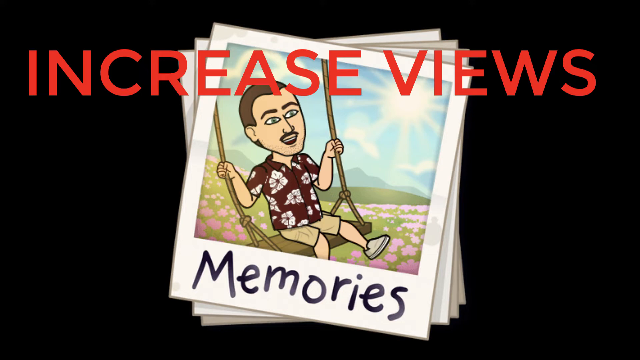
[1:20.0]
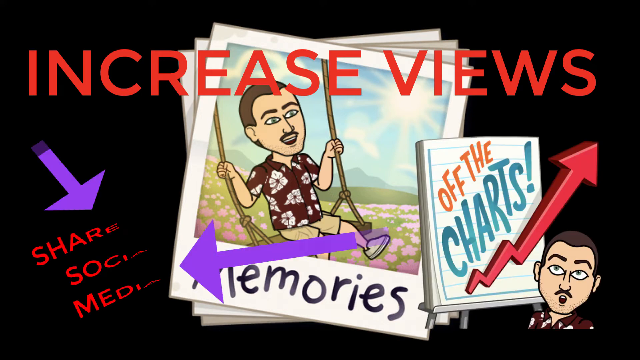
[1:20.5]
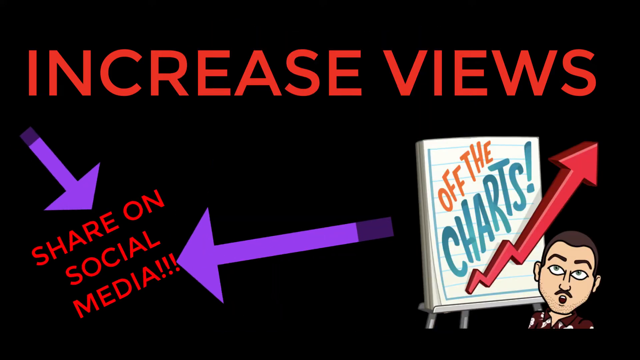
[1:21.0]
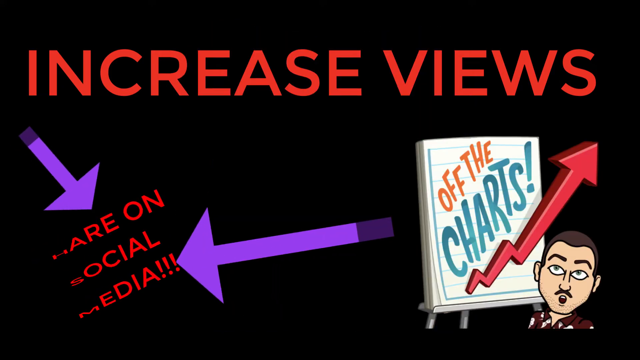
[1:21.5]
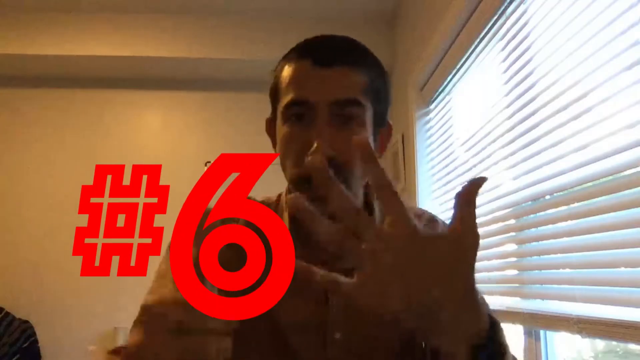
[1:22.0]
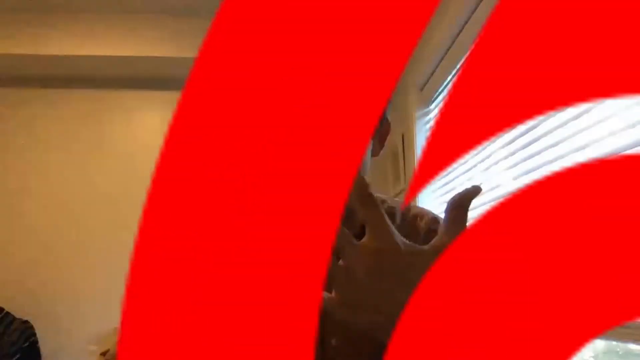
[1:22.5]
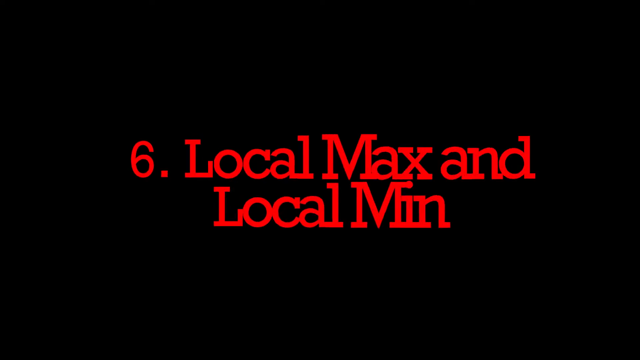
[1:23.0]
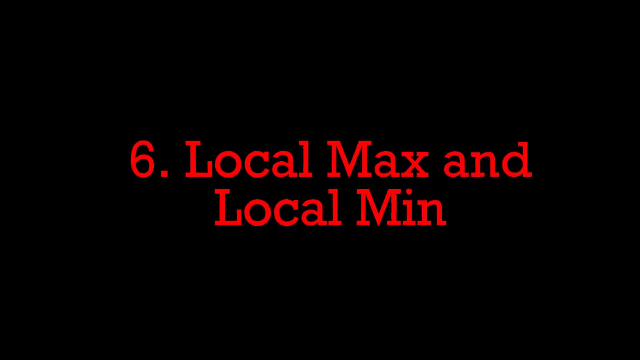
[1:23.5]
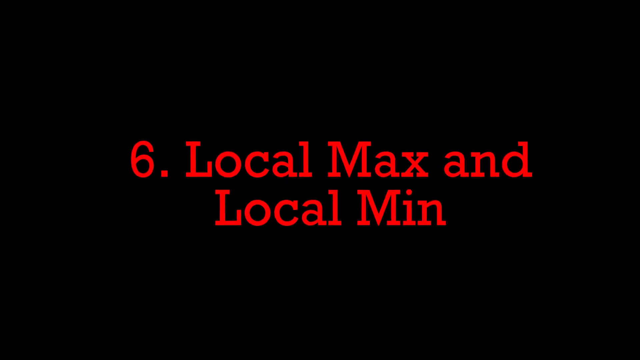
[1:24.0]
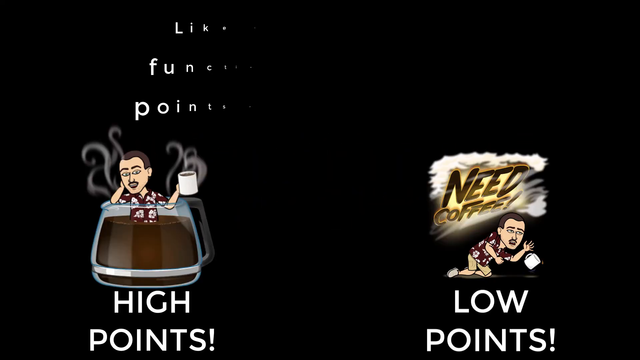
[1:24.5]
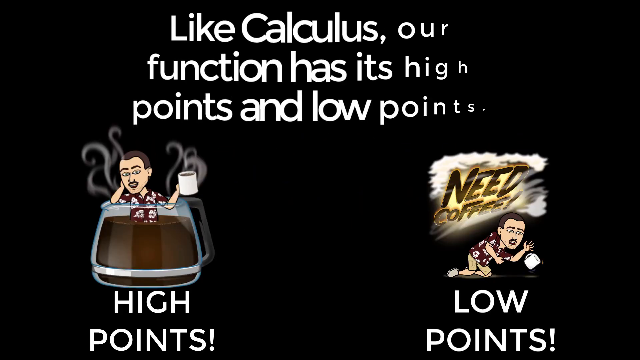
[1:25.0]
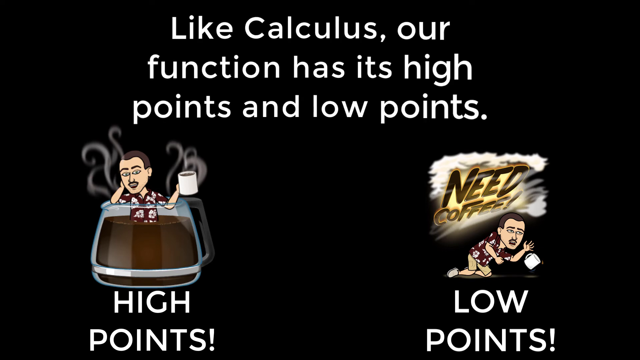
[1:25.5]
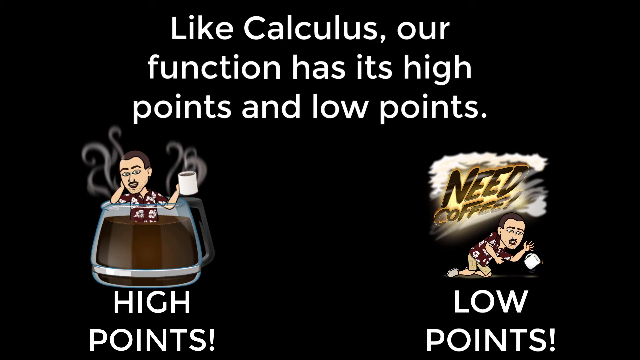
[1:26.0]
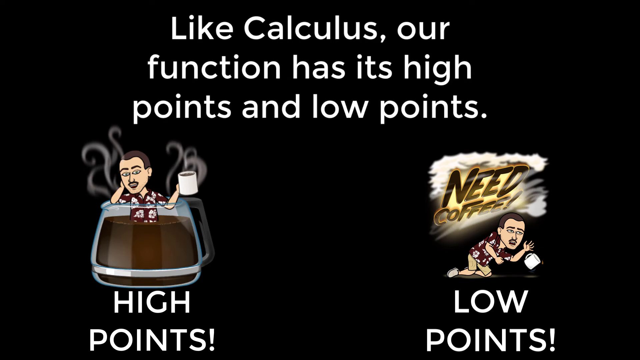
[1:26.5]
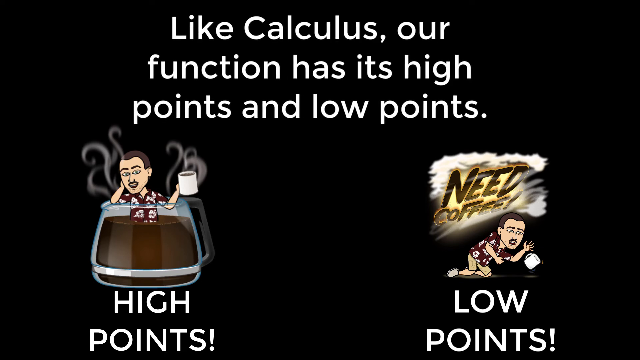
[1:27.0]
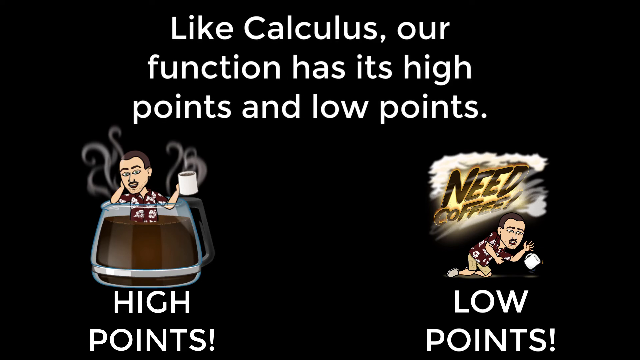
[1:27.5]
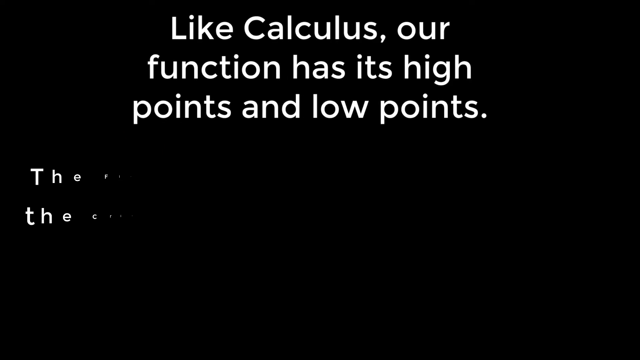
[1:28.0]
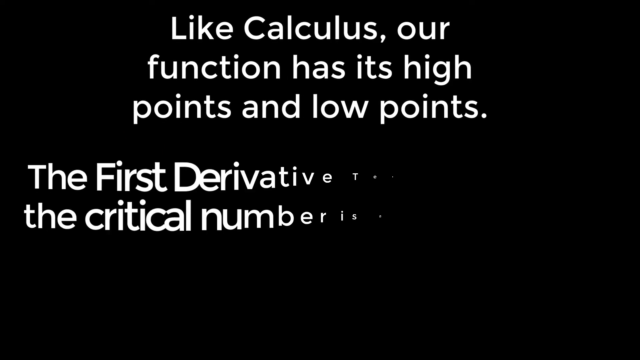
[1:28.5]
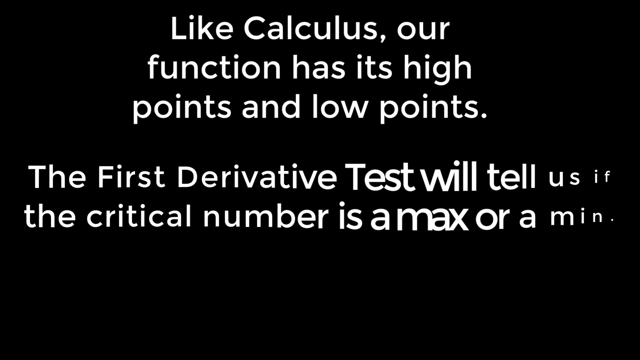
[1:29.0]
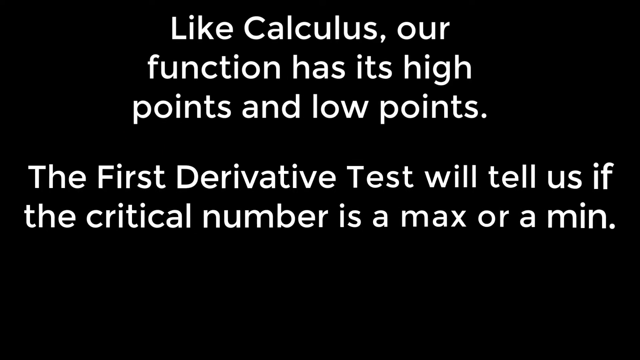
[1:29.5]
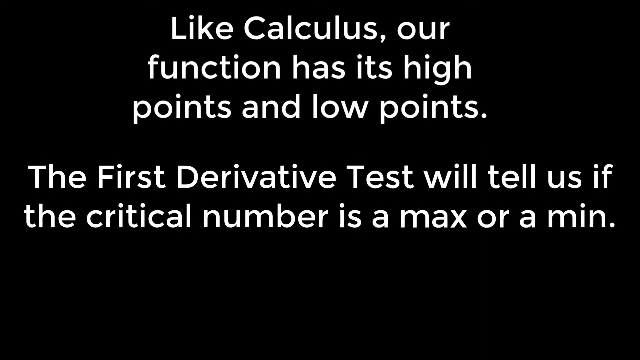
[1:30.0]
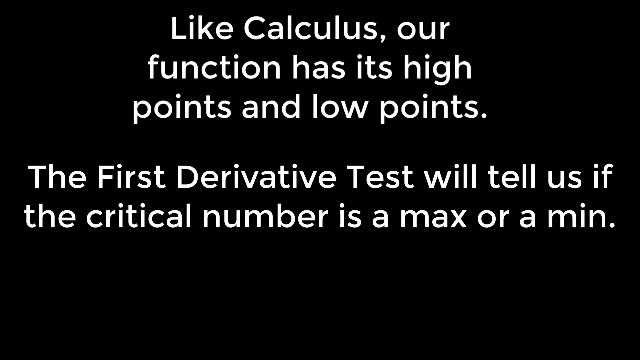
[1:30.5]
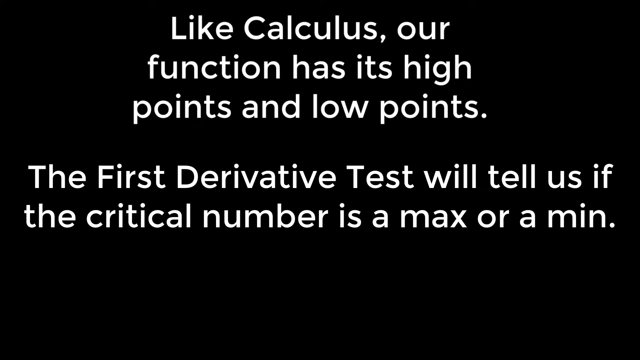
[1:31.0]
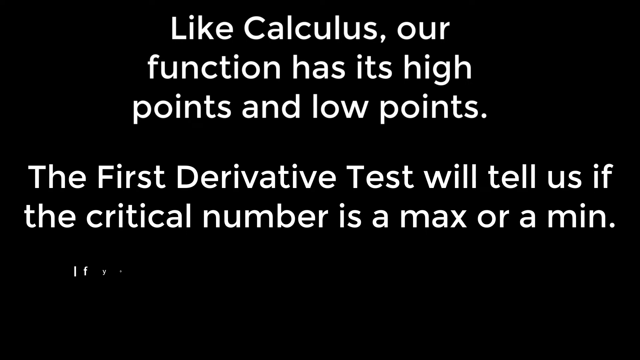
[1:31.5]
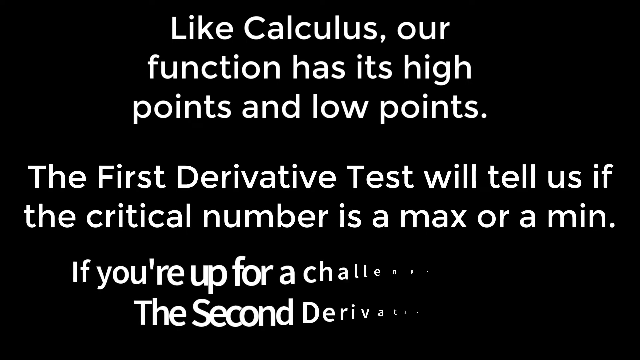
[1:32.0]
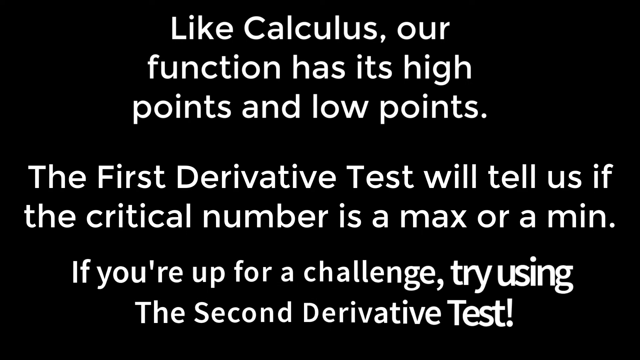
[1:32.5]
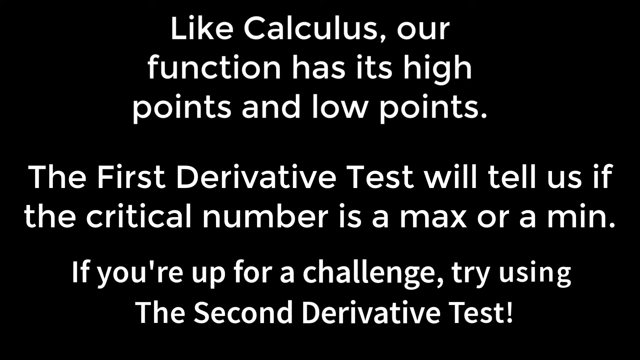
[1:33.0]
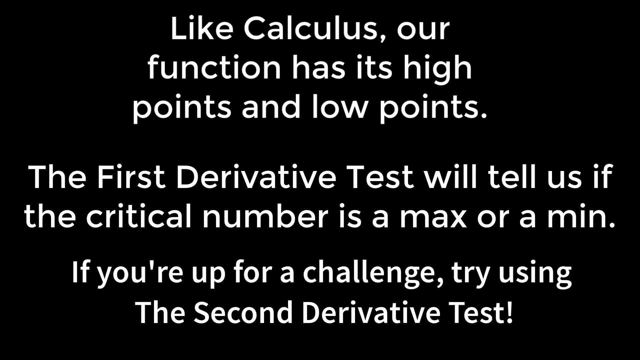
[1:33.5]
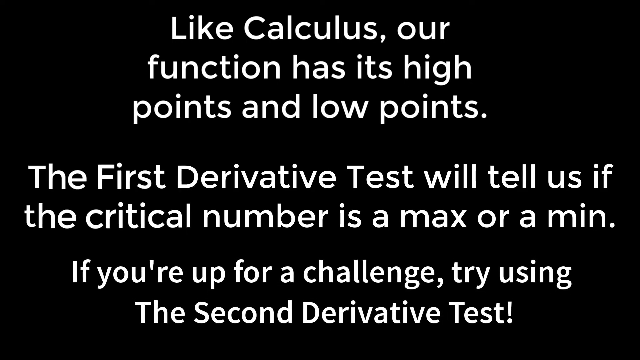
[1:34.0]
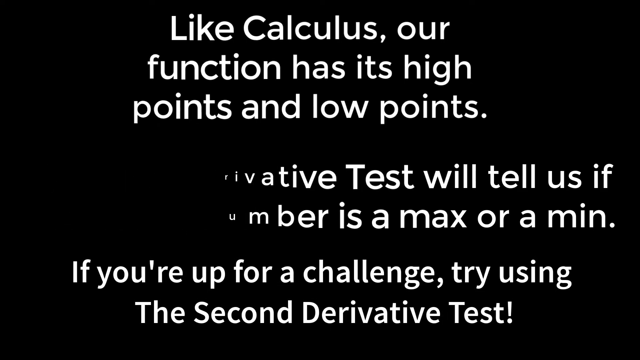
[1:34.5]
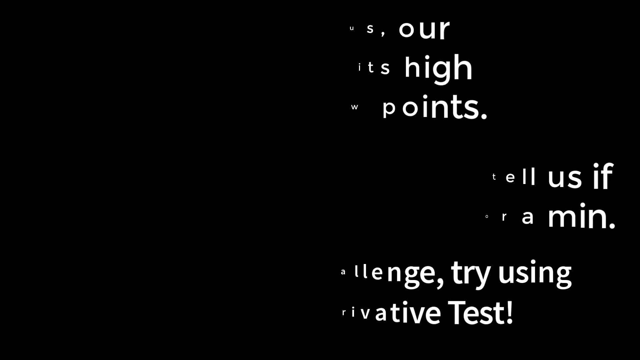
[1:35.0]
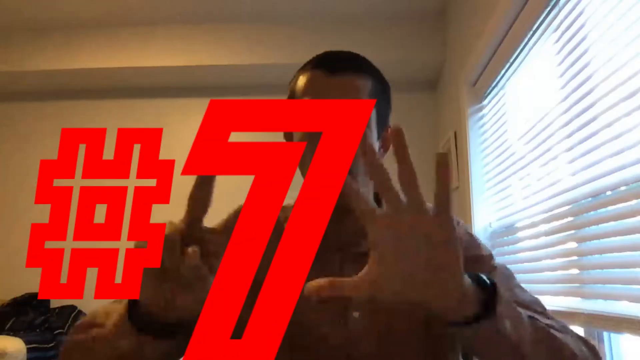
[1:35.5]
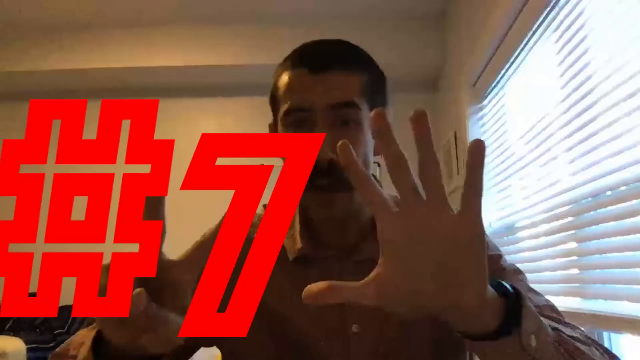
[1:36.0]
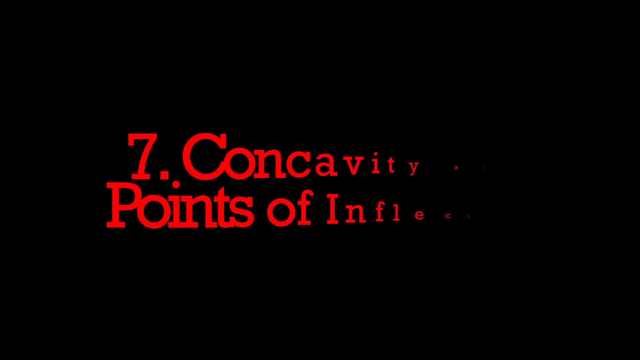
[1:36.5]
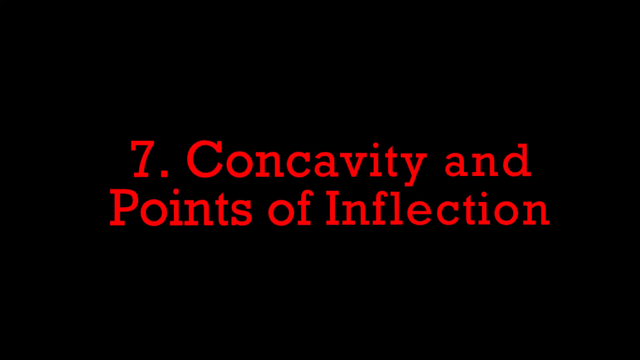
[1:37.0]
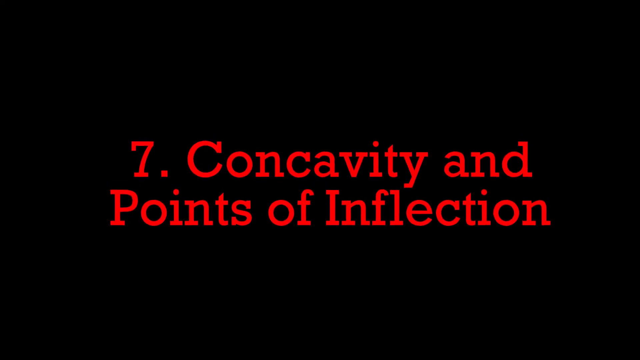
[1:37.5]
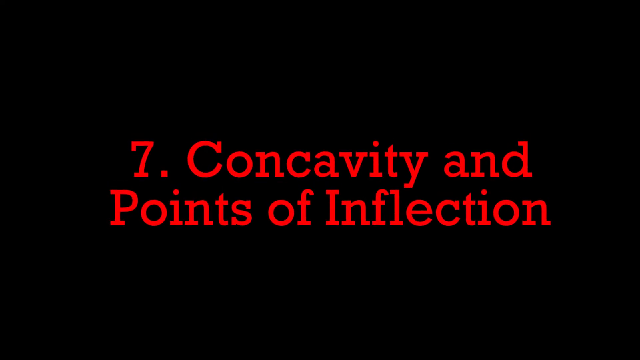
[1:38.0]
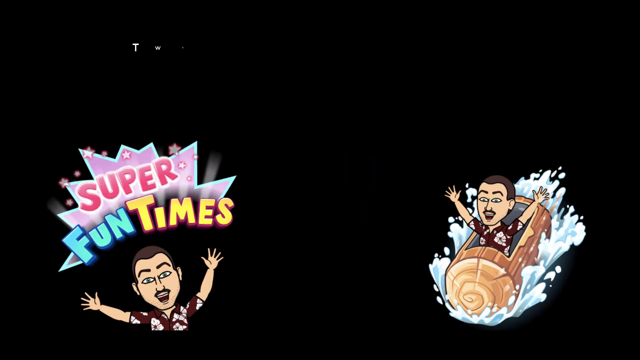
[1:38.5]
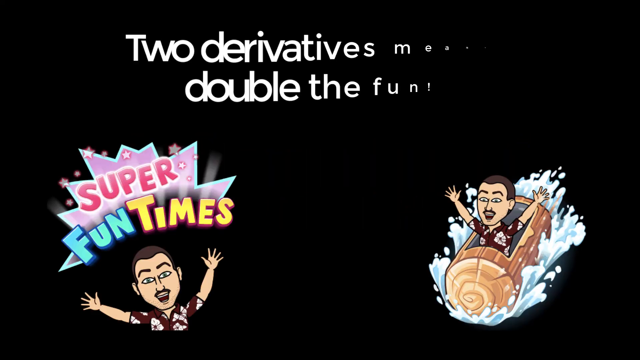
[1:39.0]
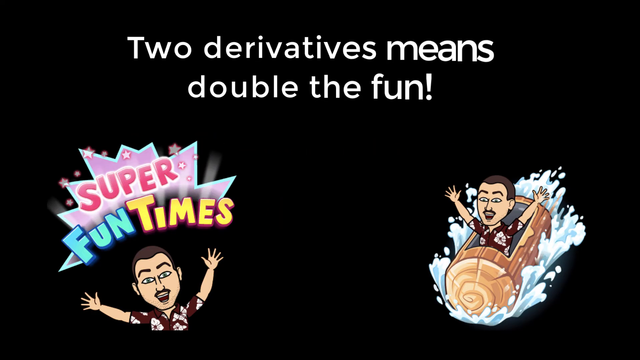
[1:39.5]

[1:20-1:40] Red text at the top of a black background says "increase views." At the bottom right, a cartoon man looks up in surprise next to a chart that says "off the charts," with a red arrow going off the chart. To the left, two purple arrows point at a red sentence saying "share on social media." The scene changes to the man in his room holding up six fingers, with a red "number 6" at the bottom left. A black background then shows "6. Local Max and Local Min." Next come two cartoon men: the one on the left is inside a coffee cup, with "high points" below him; the one on the right has "need coffee" above him as he drops coffee, with "low points" below him. A sentence at the top says "like calculus our high function has its high points and low points." The cartoon figures disappear and are replaced by the sentence "the first derivative test will tell us if the critical number is a max or a min," and below it, "if you're up for a challenge, try using the second derivative test." The middle sentences disappear, then the top, then the bottom. The man then holds up seven fingers, with a red "number seven" to his left. A black background follows with the sentence "seven, concavity and points of reflection." It disappears, and a new scene shows a cartoonish man on the left with "super fun times" above him, and on the right the cartoonish man riding a log in the water. At the top it says "two derivatives means double the fun."